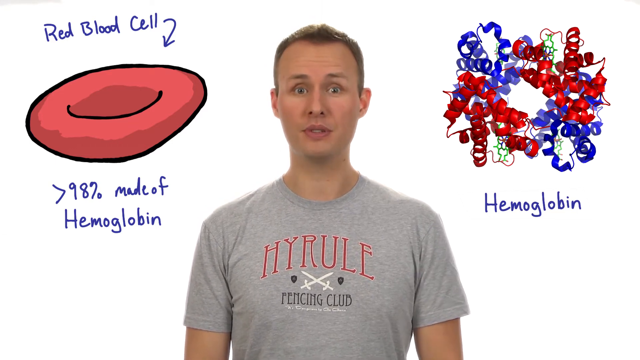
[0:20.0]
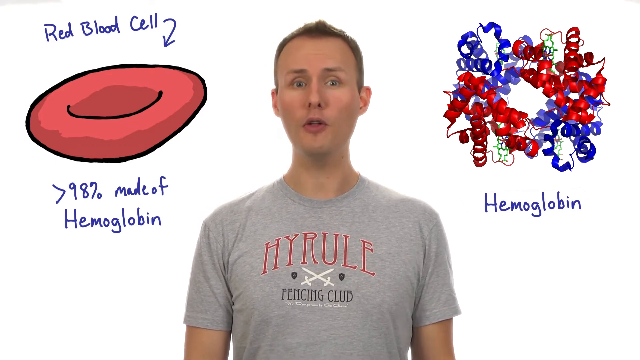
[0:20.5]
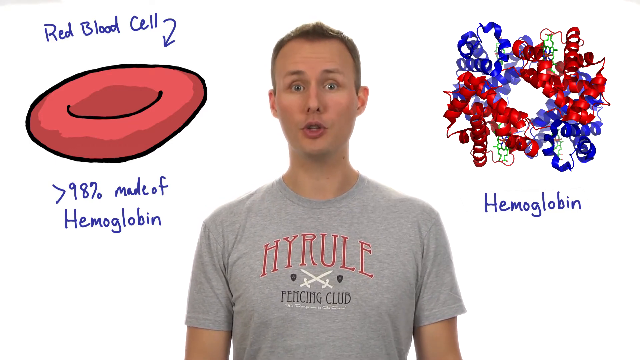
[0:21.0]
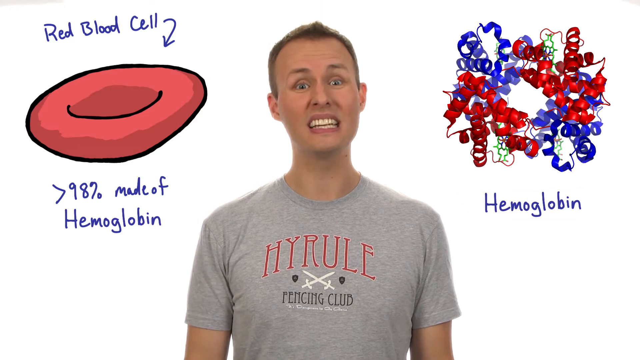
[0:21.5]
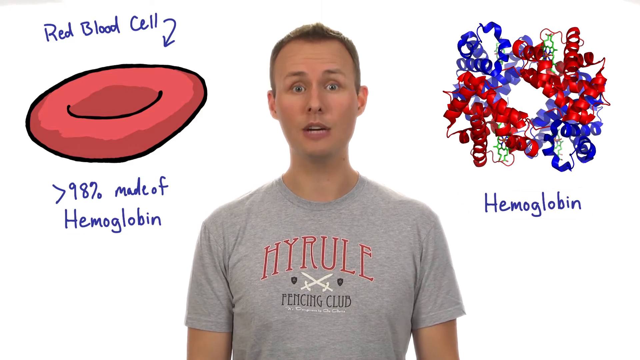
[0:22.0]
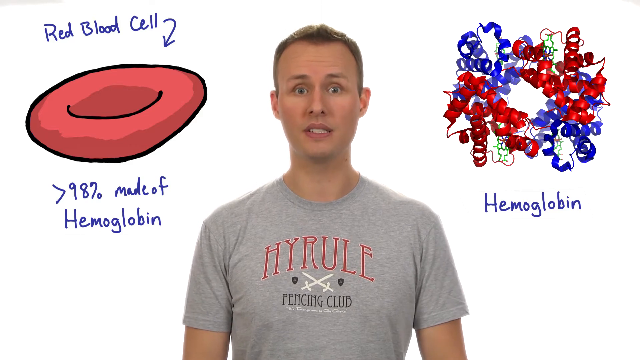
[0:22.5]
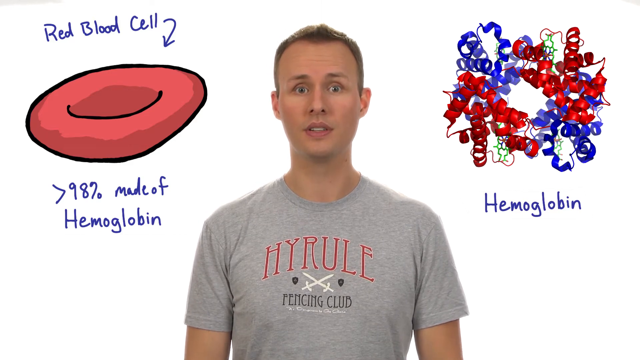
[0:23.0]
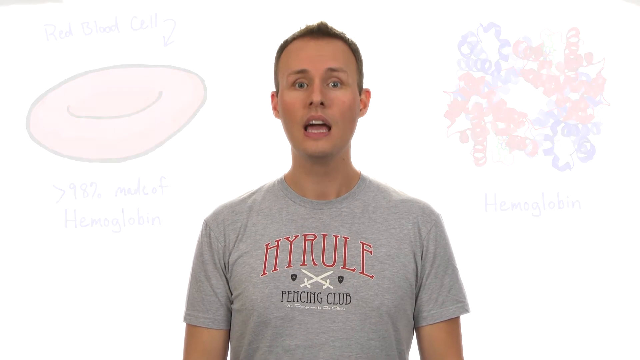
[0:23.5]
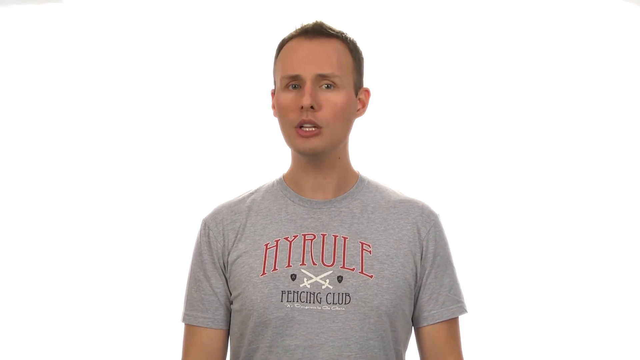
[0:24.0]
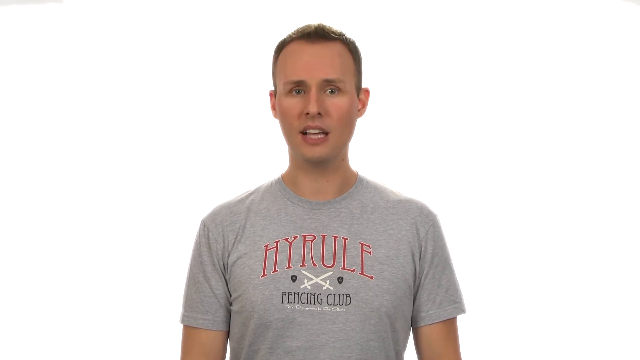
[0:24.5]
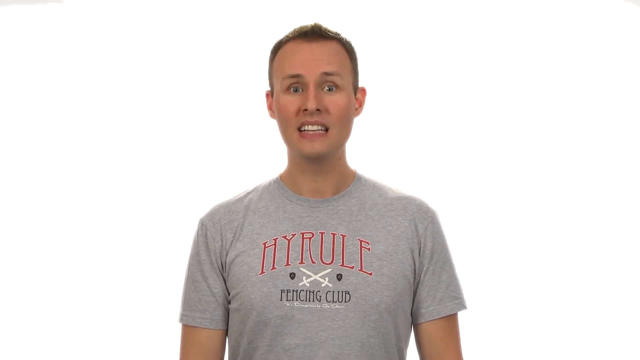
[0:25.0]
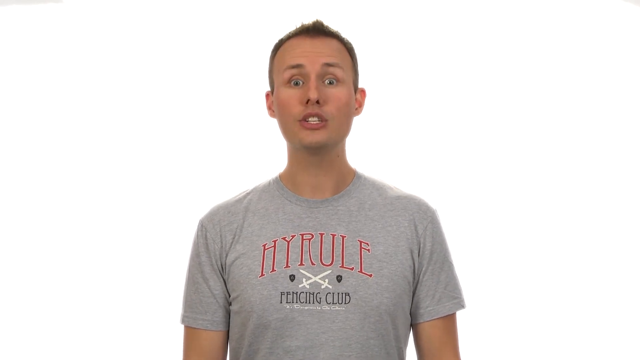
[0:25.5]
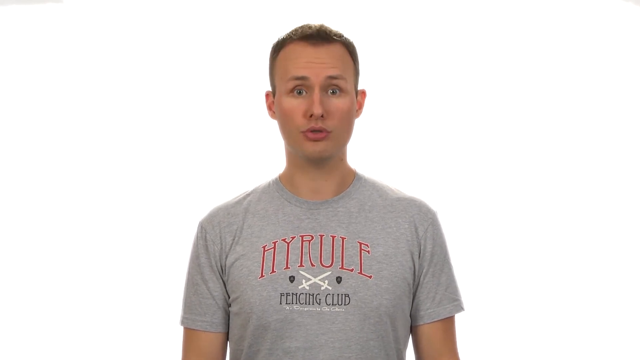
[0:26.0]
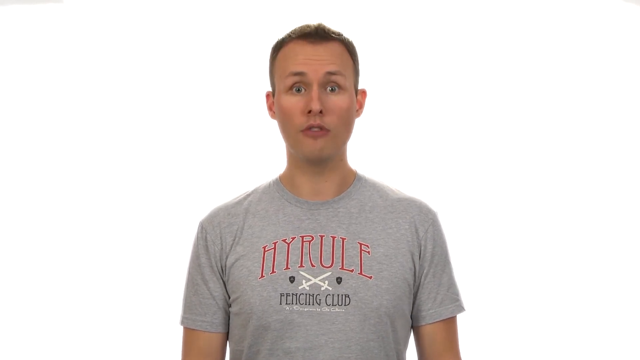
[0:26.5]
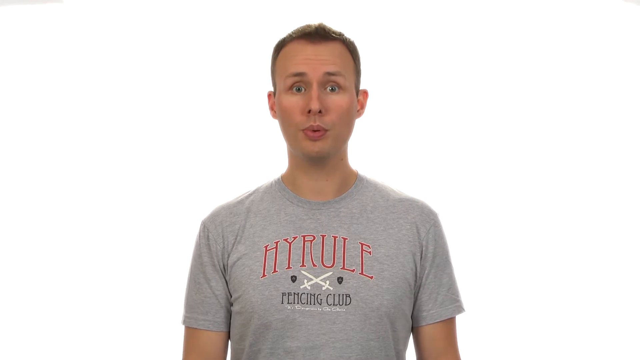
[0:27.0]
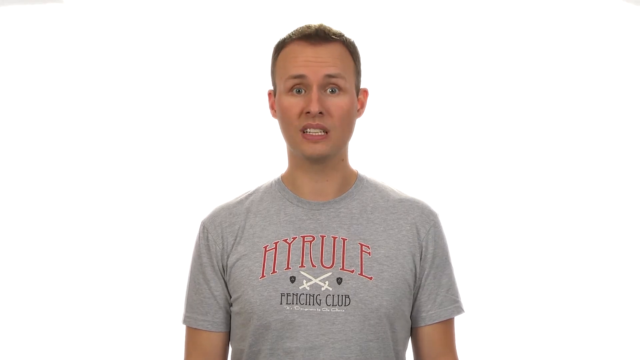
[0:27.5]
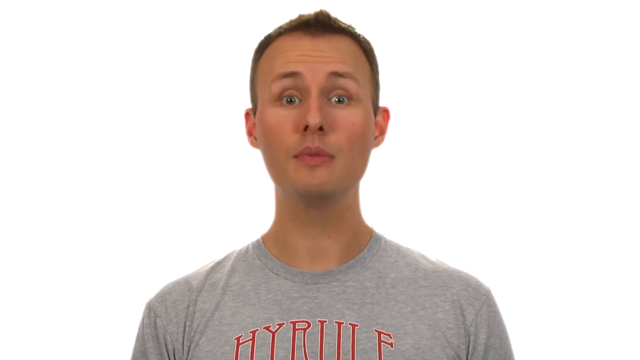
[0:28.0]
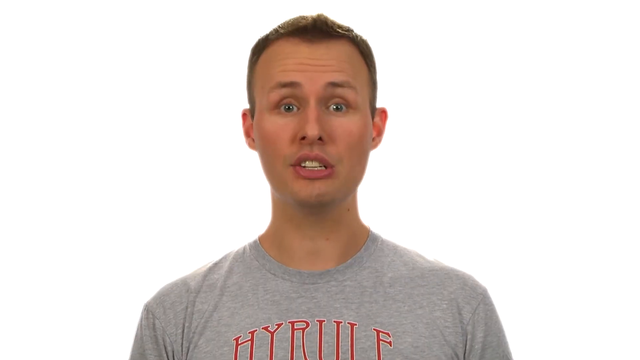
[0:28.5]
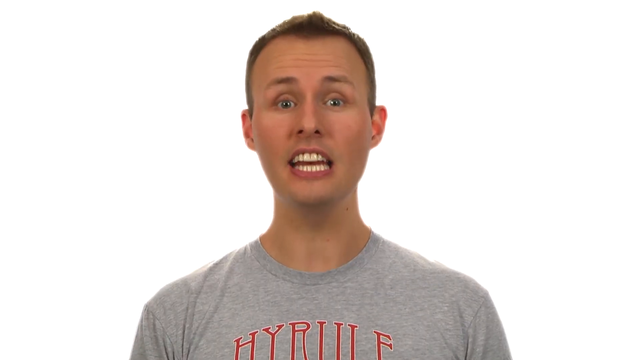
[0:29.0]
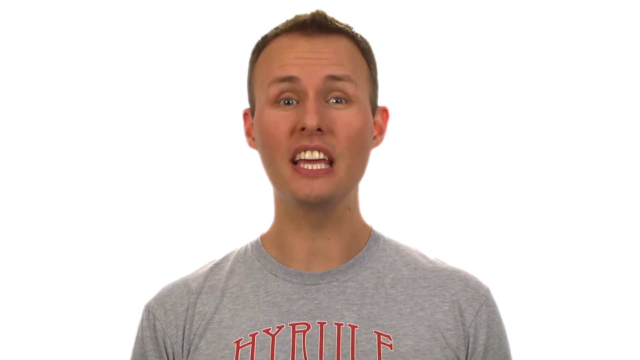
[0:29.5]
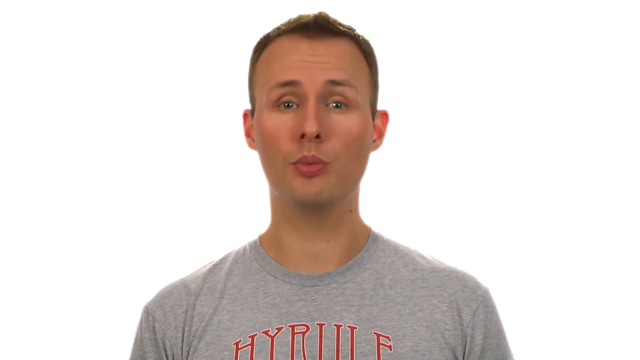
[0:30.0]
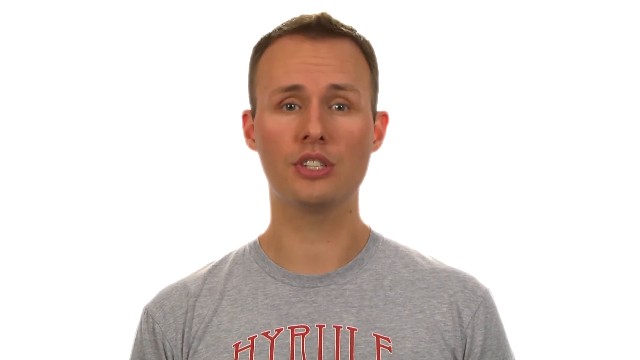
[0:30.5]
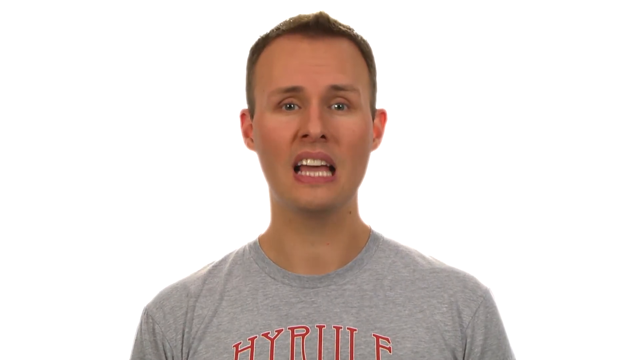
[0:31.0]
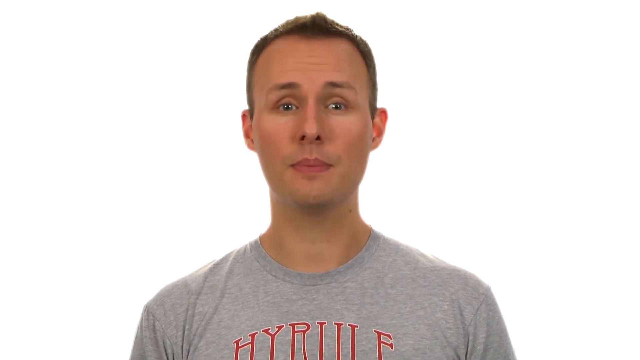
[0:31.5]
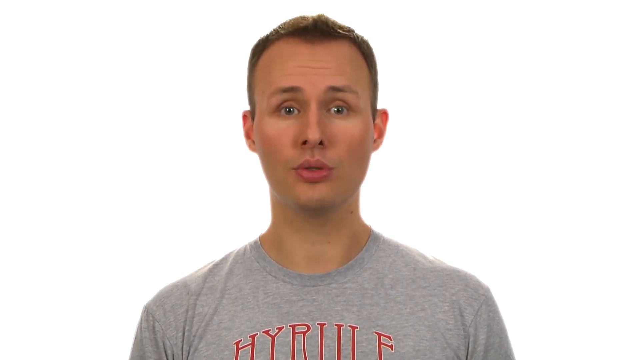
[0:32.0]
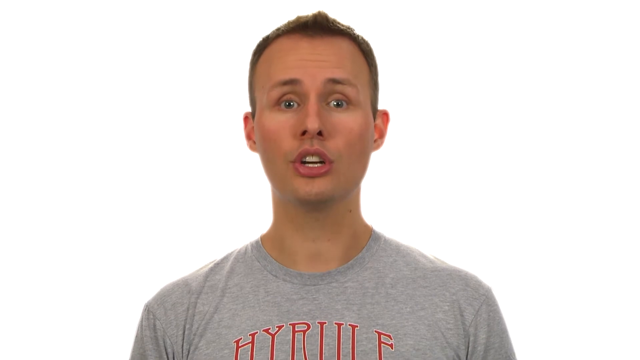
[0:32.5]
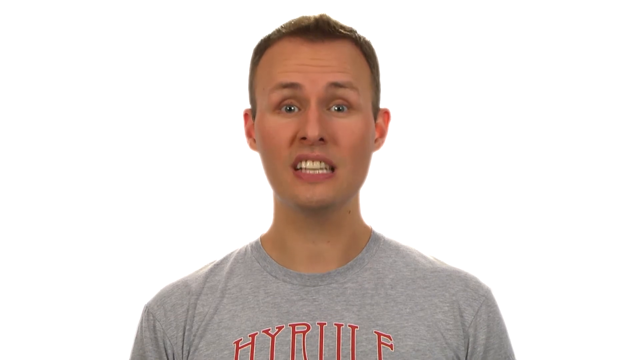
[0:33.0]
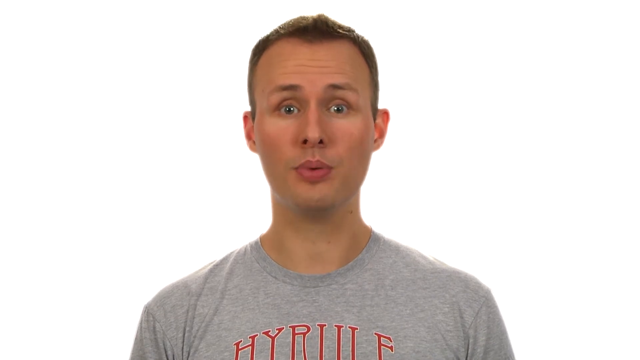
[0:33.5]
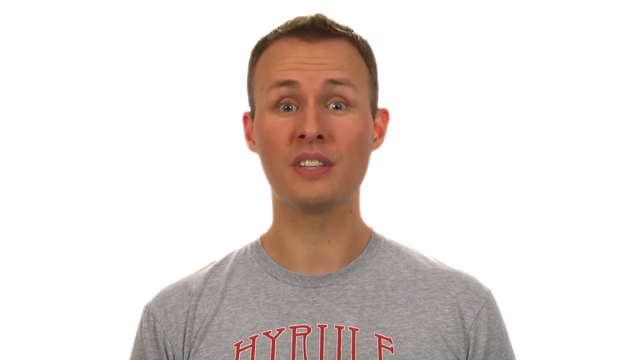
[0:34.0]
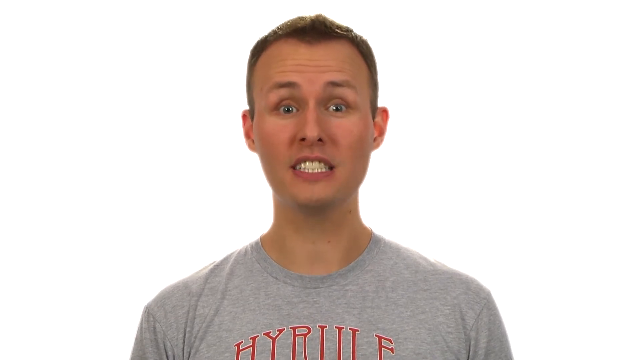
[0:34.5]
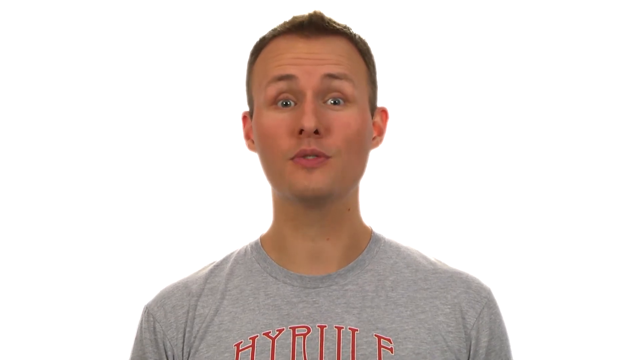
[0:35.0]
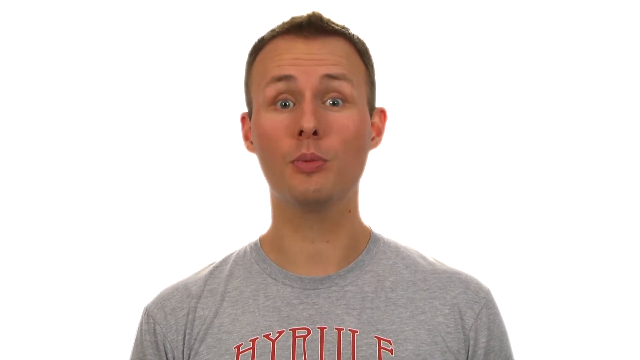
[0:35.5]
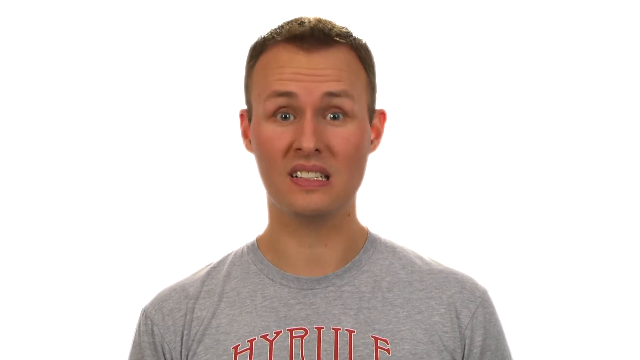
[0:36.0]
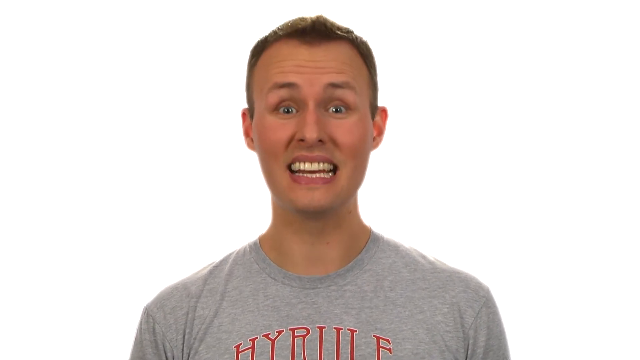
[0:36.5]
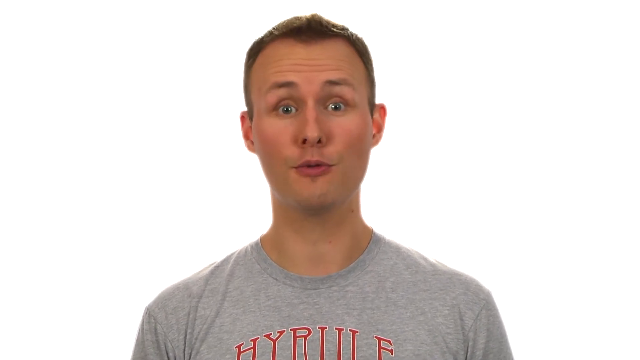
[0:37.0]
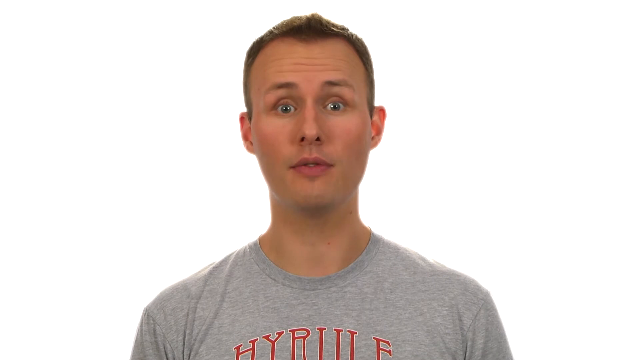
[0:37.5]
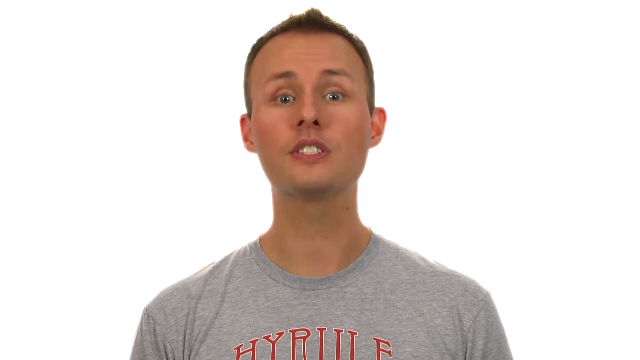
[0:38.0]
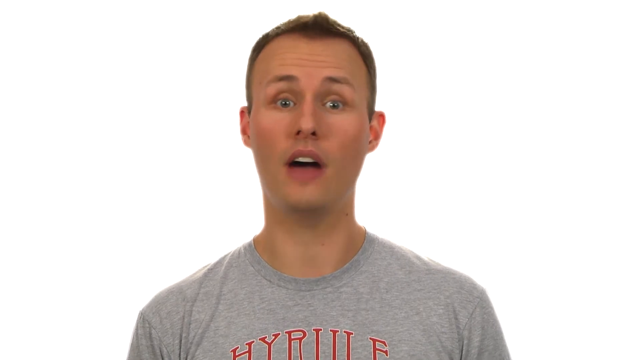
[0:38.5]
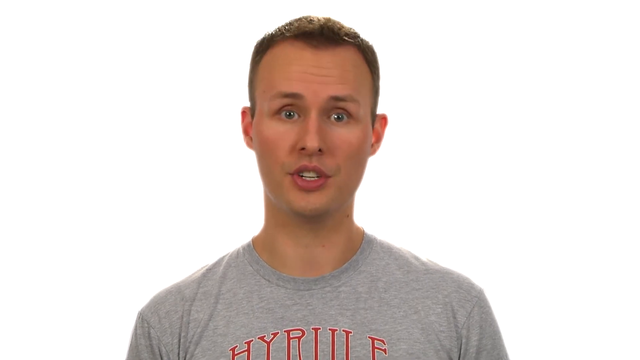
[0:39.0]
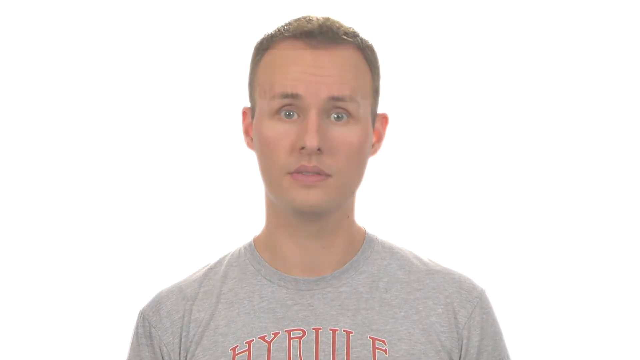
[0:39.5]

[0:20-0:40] Another image appears to the host's right, labeled hemoglobin: a structure of red and blue ribbon-like elements condensed together. Then both diagrams disappear. The camera zooms in on his face; he seems to enunciate his words carefully, judging by his lip movements, and he barely blinks as he talks uninterrupted for about ten seconds. Next comes a brief glimpse of the next segment, titled "sickle cell anemia - HBB gene to protein," with the title underlined. The host speaks in front of a very bright white screen the whole time, and the studio has plenty of light, so everything looks very bright.